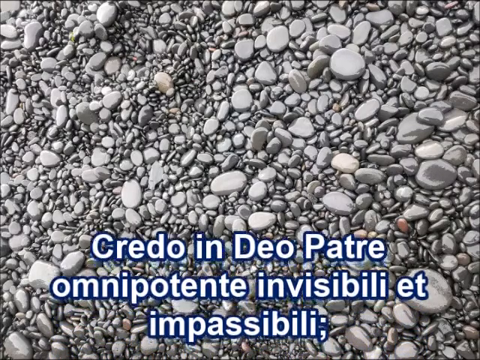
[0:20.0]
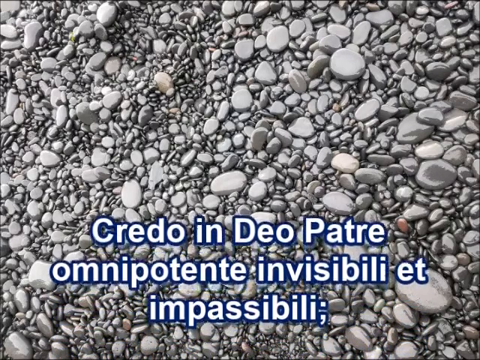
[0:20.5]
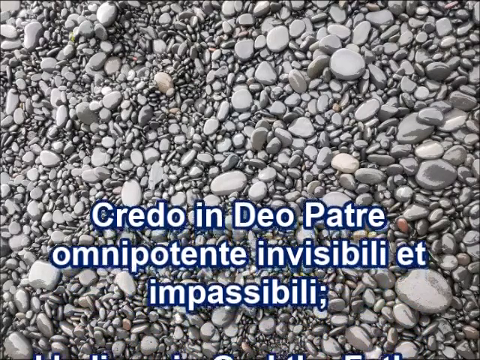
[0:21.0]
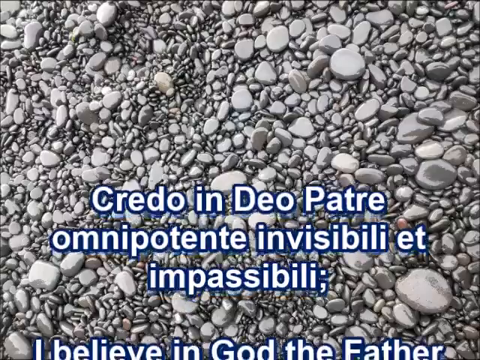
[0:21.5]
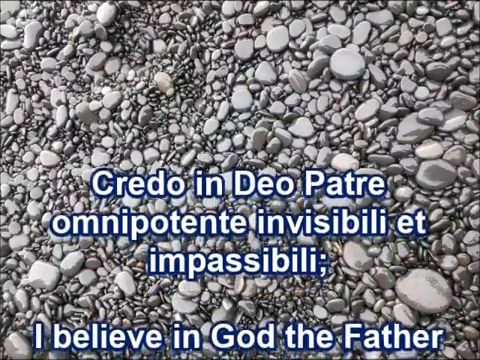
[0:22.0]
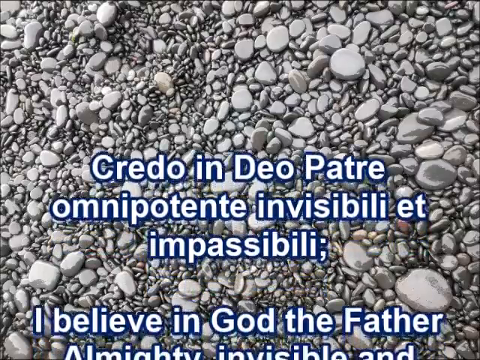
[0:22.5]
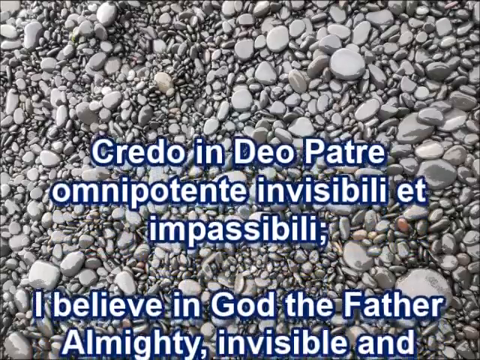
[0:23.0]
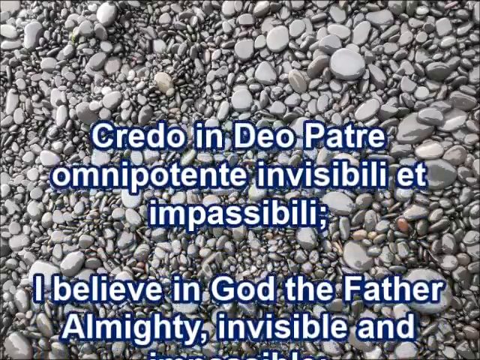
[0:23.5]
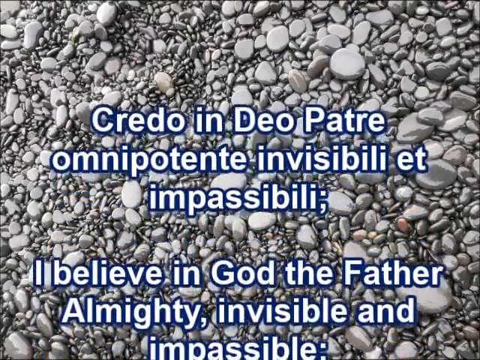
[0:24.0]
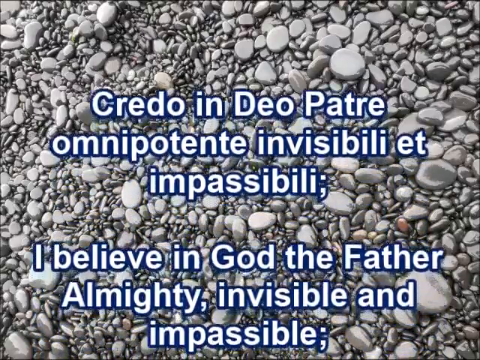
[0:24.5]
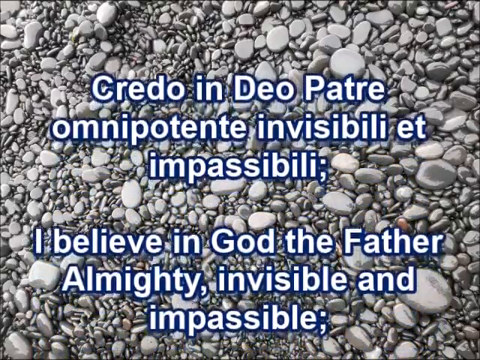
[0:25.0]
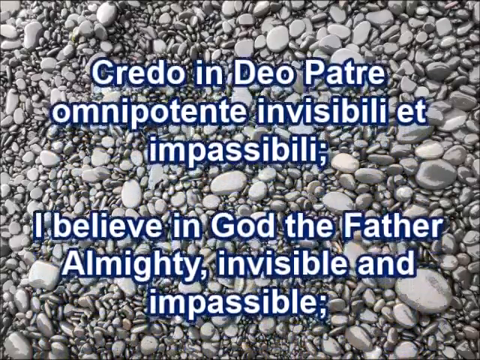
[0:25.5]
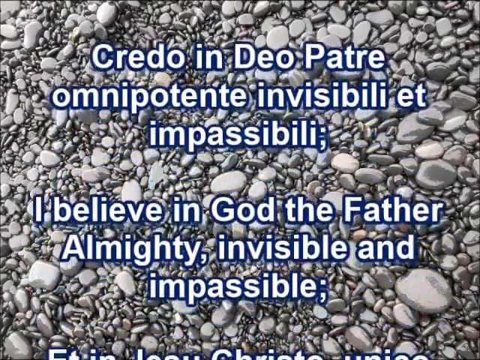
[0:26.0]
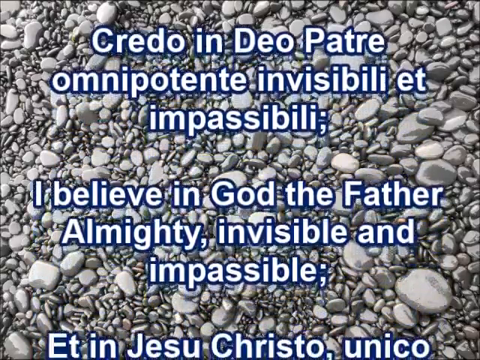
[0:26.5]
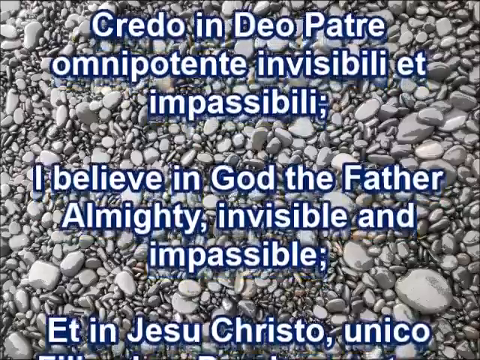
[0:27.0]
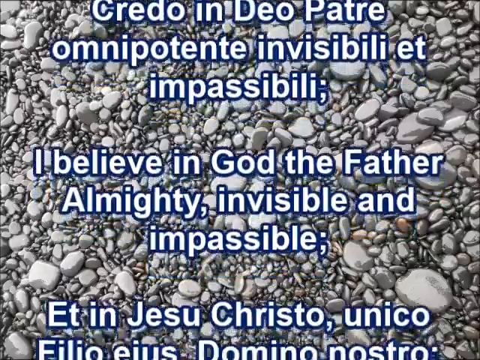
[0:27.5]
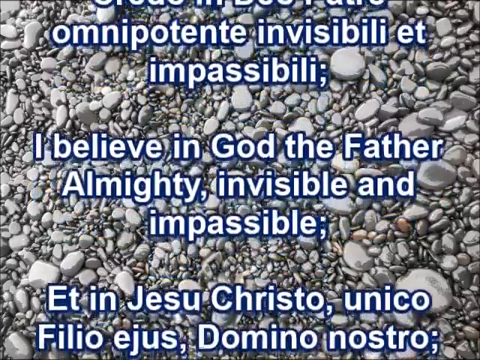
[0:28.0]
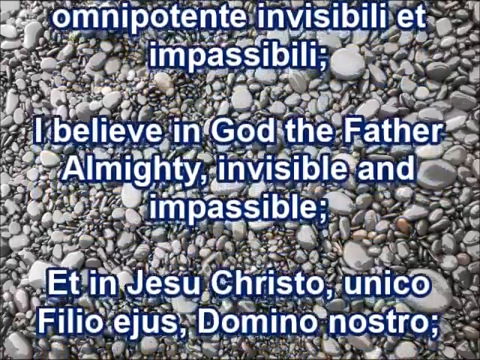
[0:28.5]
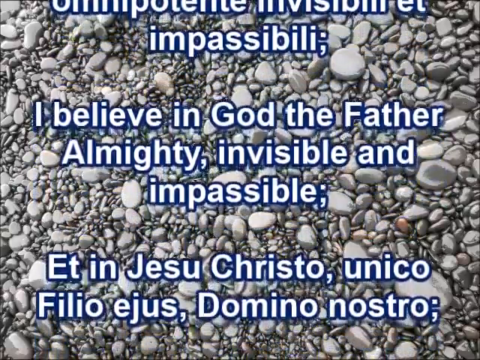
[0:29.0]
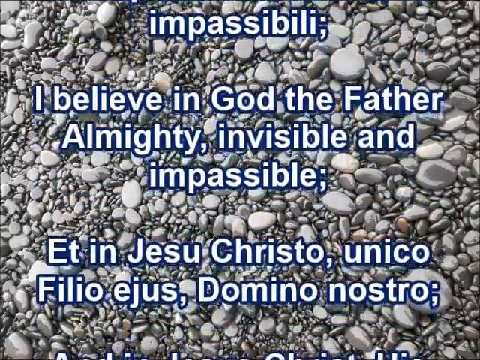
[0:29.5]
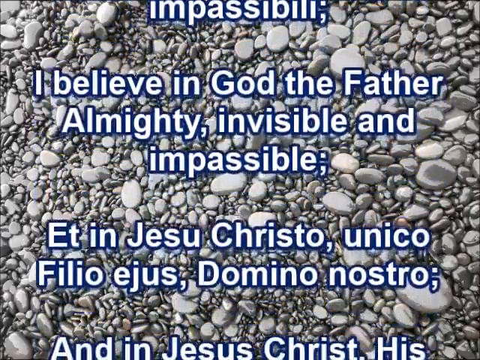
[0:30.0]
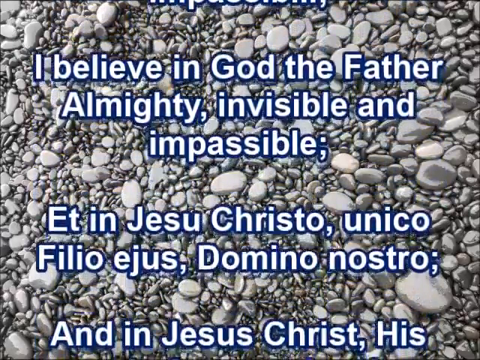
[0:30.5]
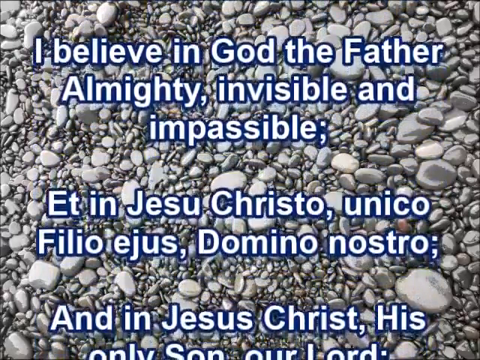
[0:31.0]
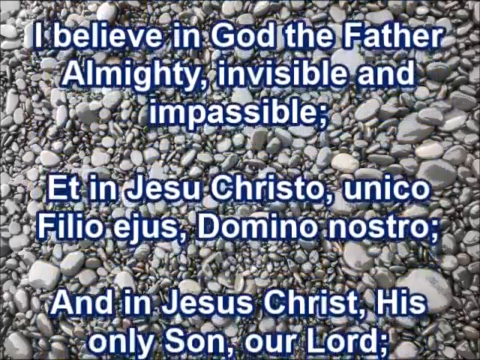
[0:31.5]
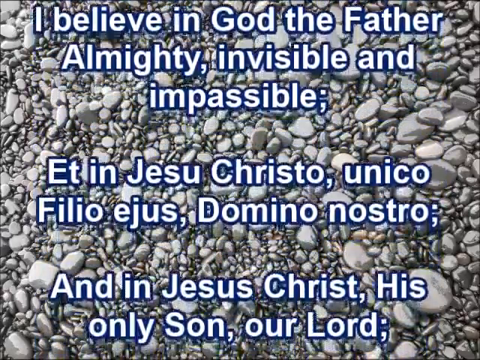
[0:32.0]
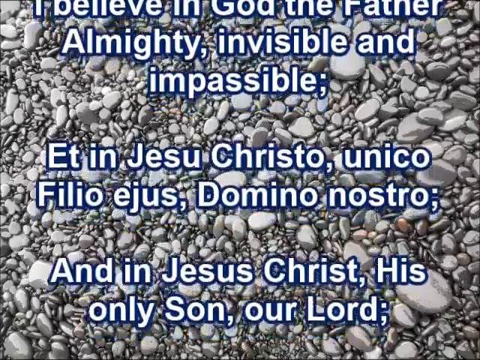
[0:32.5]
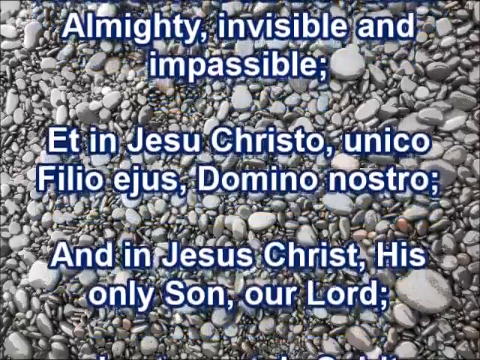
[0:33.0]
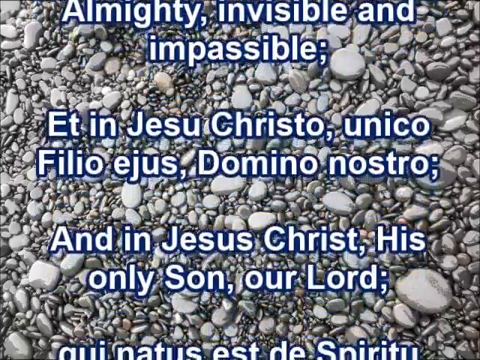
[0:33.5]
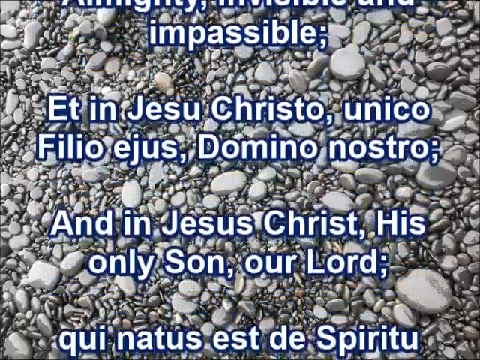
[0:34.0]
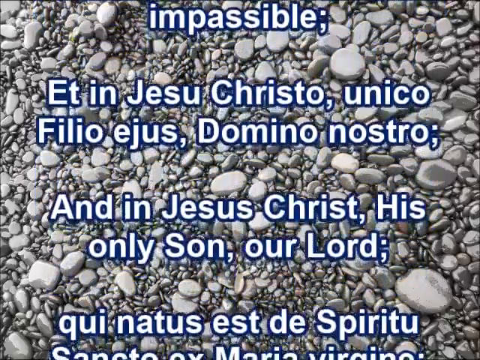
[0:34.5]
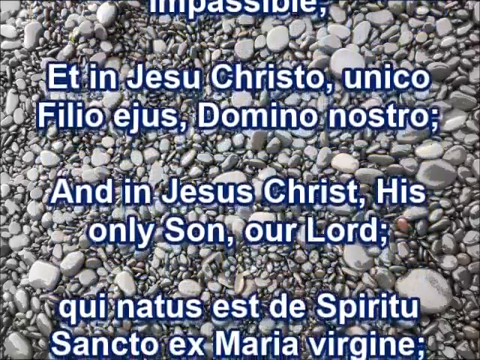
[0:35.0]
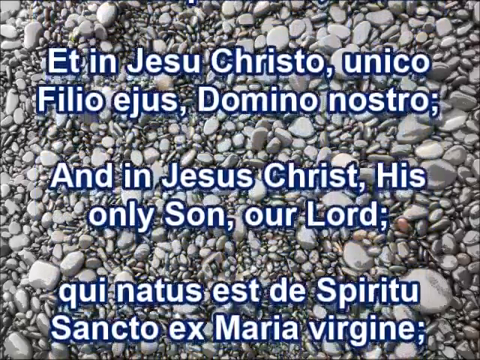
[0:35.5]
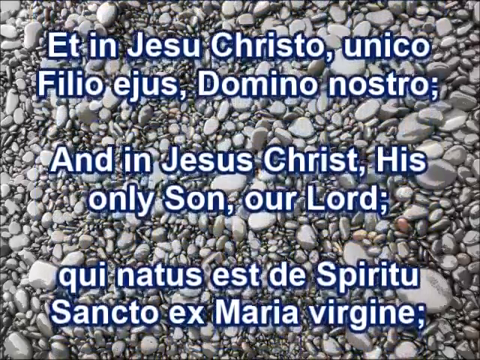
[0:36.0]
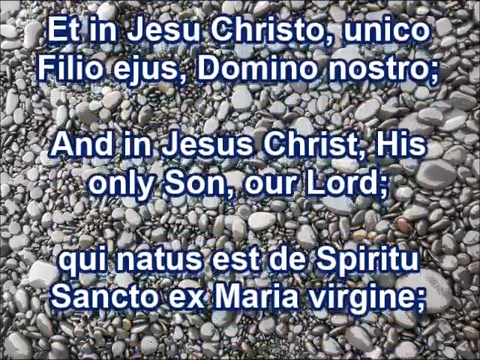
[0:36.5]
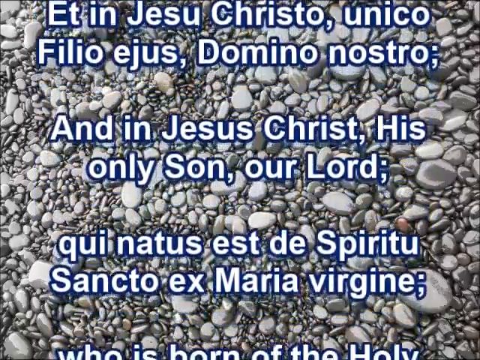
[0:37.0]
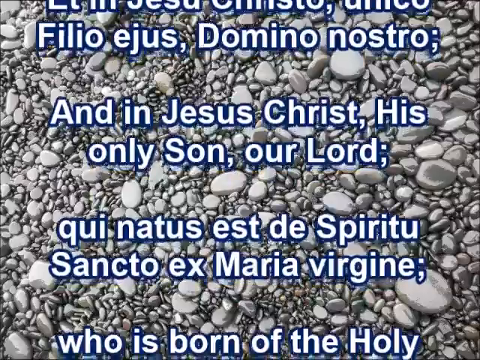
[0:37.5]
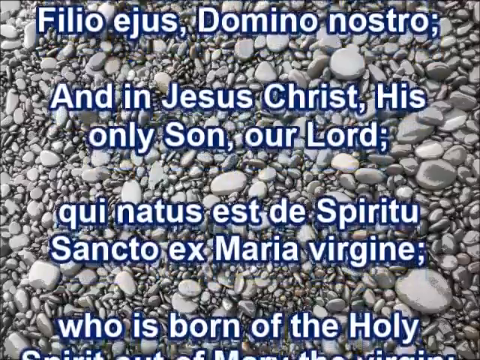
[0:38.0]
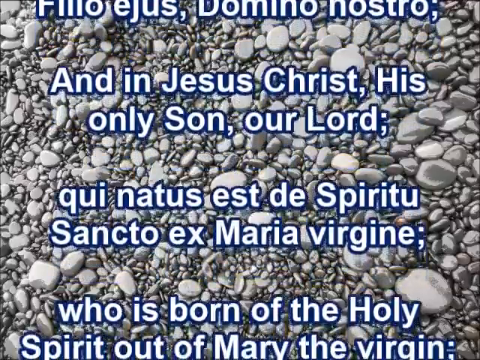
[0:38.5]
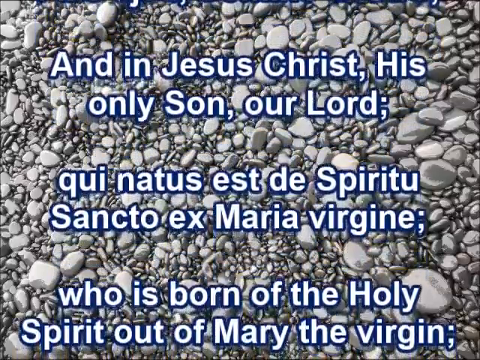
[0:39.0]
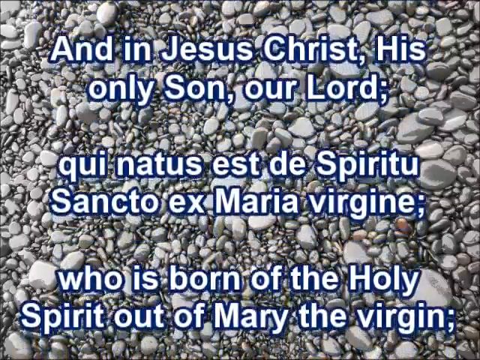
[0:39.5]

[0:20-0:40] The camera looks down at the ground, where many rocks and pebbles are piled on top of one another. Their colors range from white and light gray to dark gray, and their sizes vary across the image, from very small to very large. All of them appear to have a circular or oval shape. Words written in Spanish are on the screen in white with a dark blue background. After these, the words "I believe in God the Father Almighty, invisible and impassable" are written. More Spanish words follow before the text says "and in Jesus Christ, his only son, our Lord".